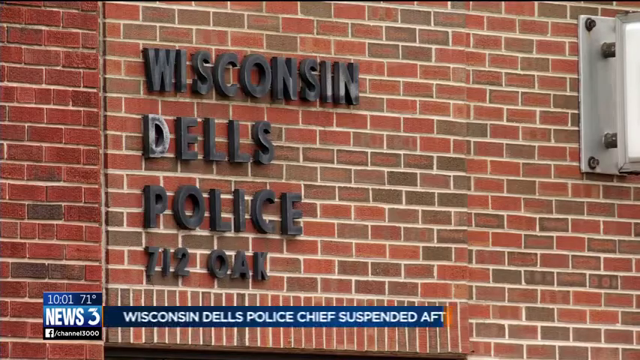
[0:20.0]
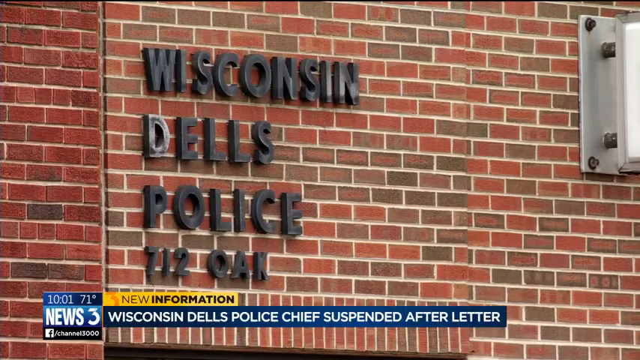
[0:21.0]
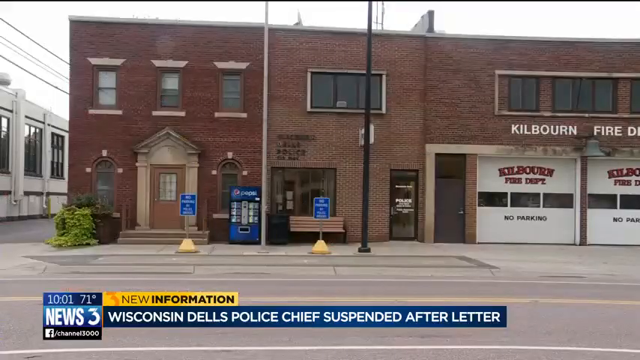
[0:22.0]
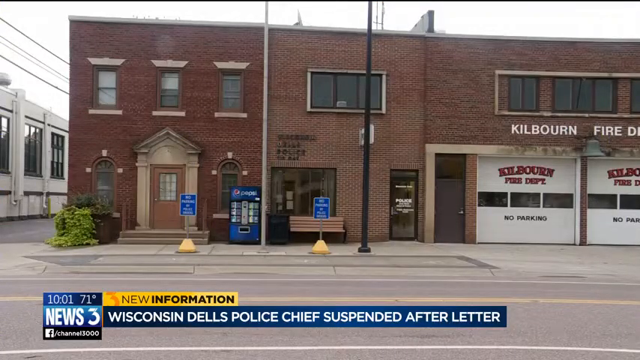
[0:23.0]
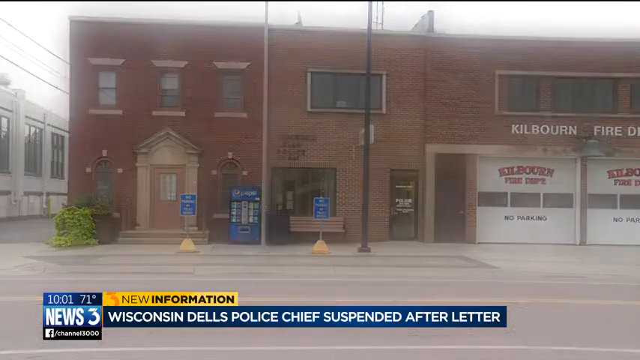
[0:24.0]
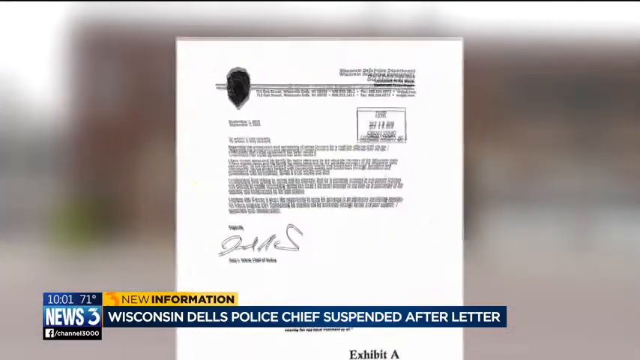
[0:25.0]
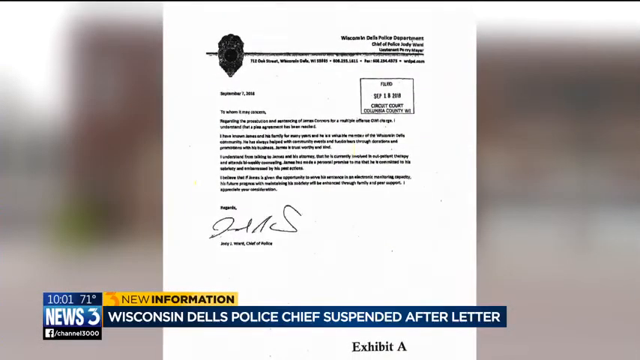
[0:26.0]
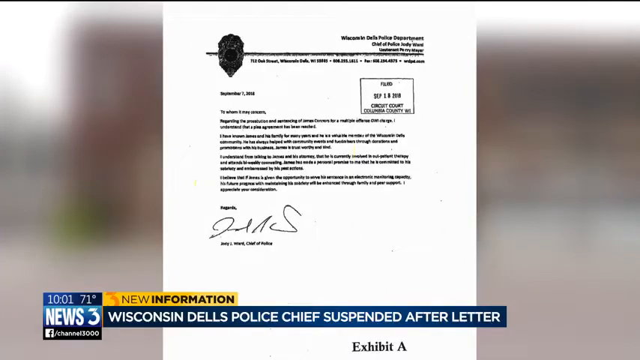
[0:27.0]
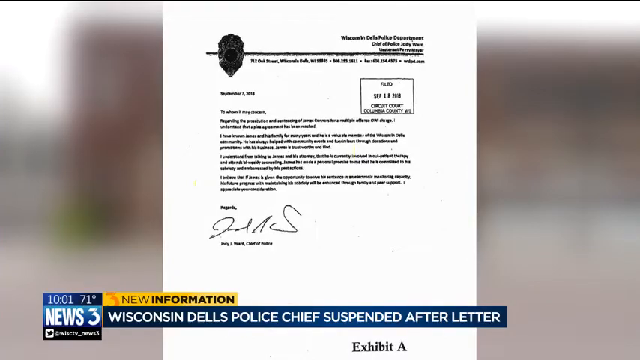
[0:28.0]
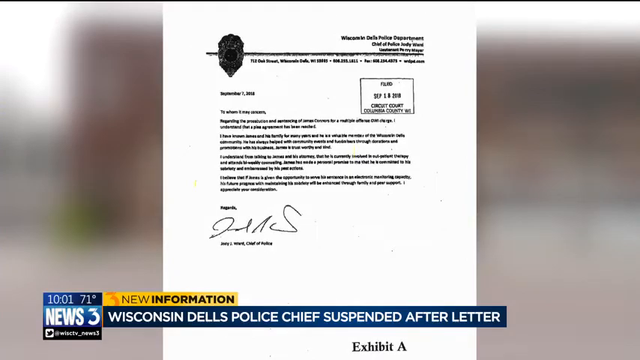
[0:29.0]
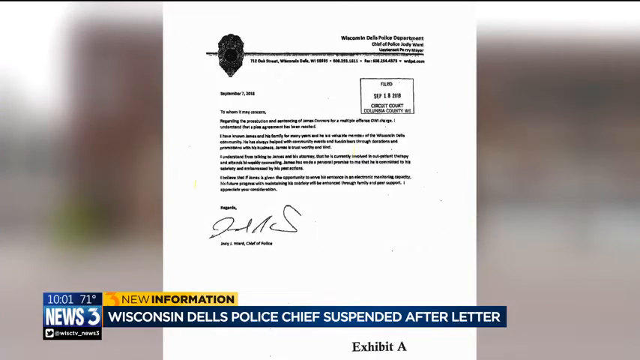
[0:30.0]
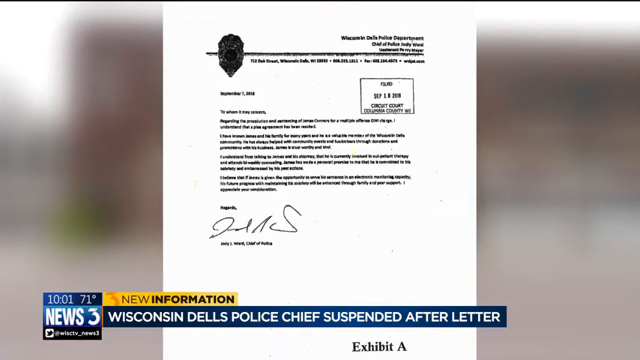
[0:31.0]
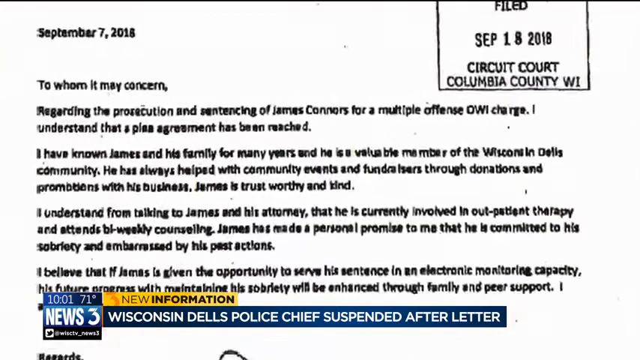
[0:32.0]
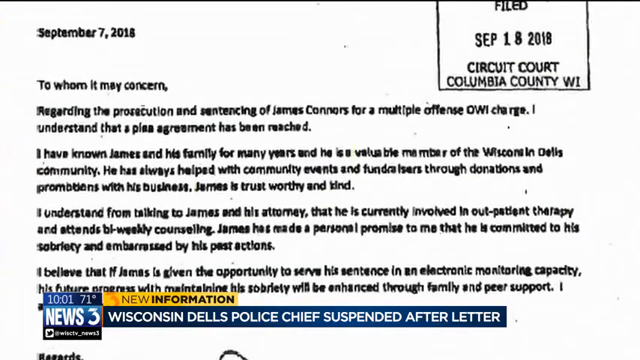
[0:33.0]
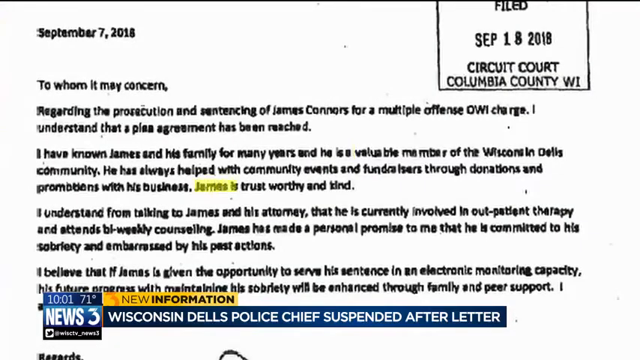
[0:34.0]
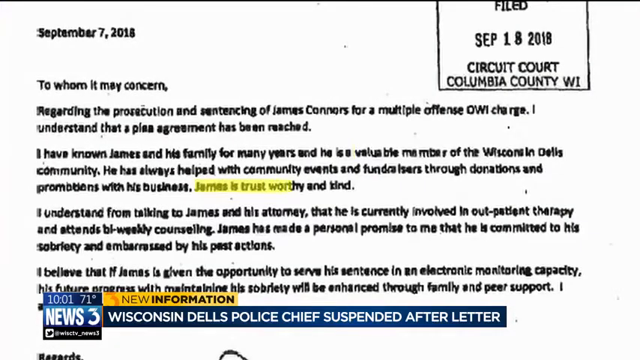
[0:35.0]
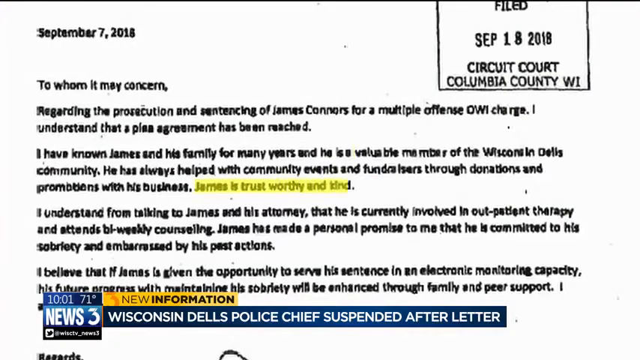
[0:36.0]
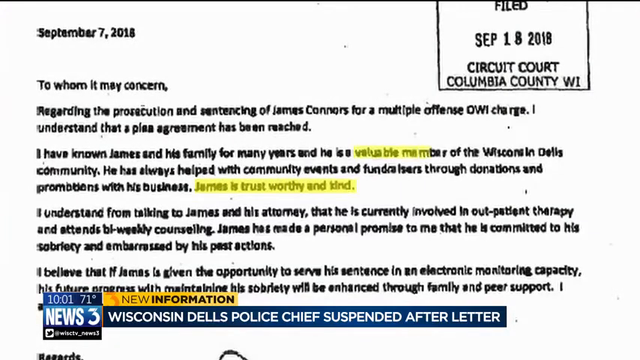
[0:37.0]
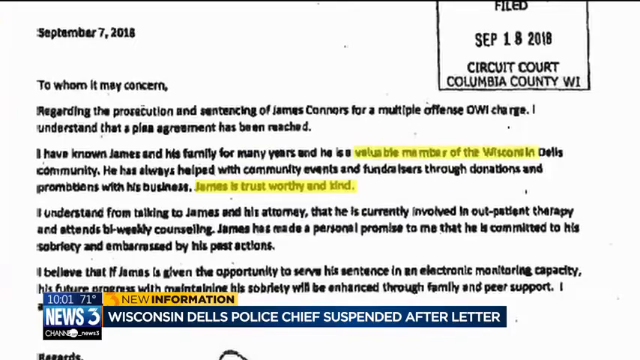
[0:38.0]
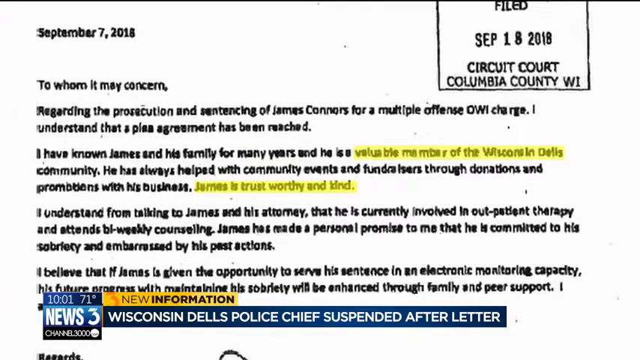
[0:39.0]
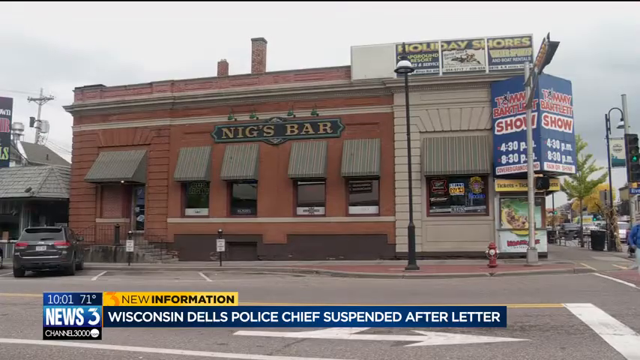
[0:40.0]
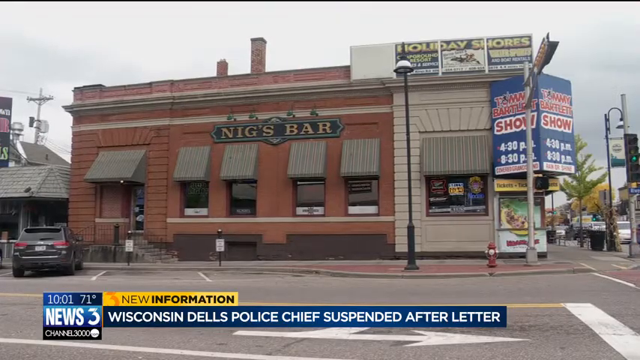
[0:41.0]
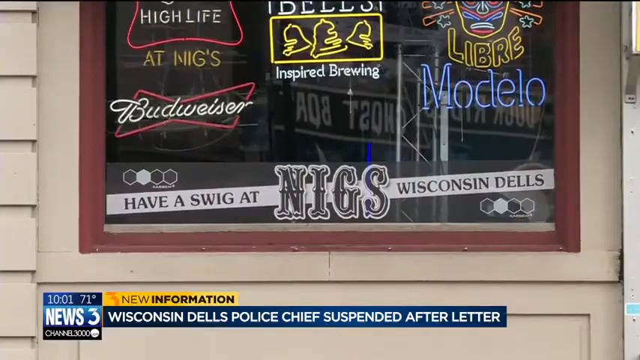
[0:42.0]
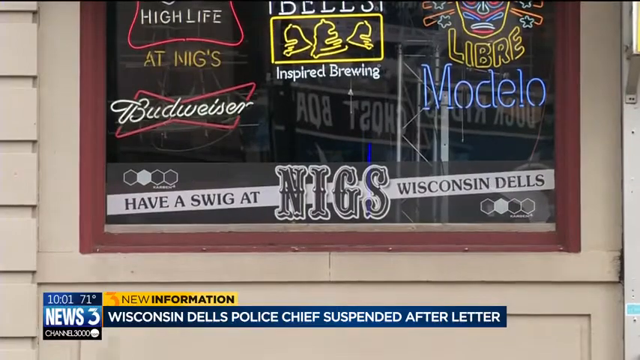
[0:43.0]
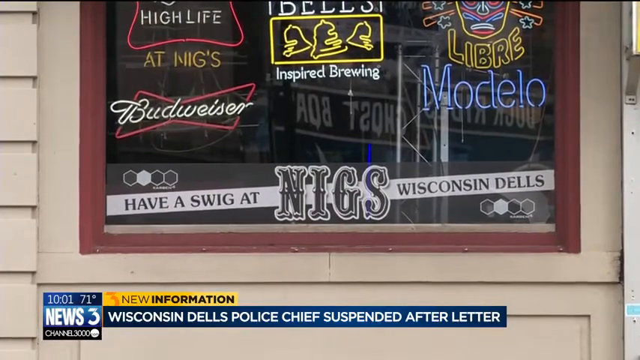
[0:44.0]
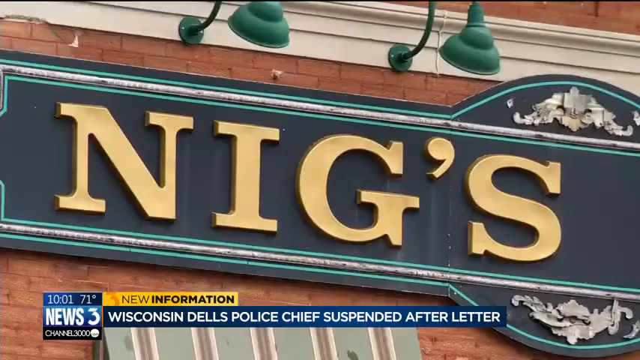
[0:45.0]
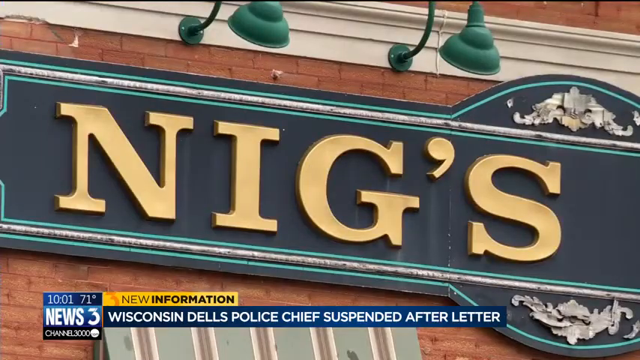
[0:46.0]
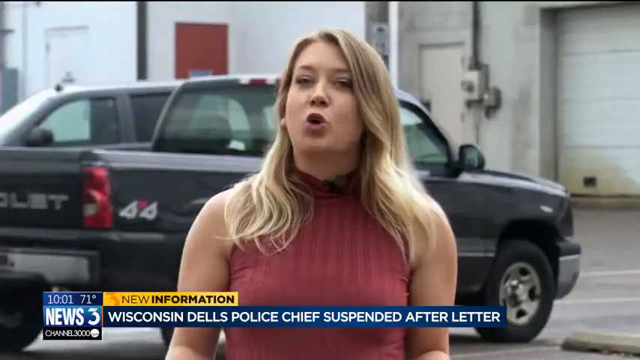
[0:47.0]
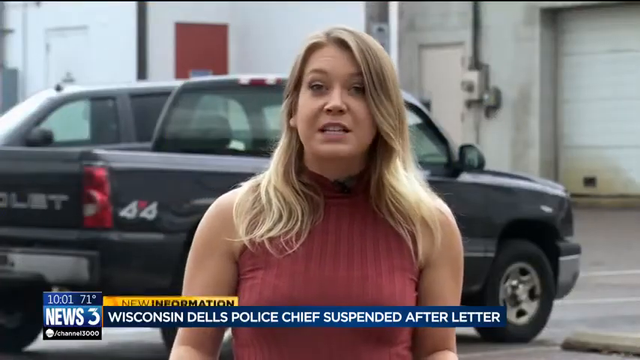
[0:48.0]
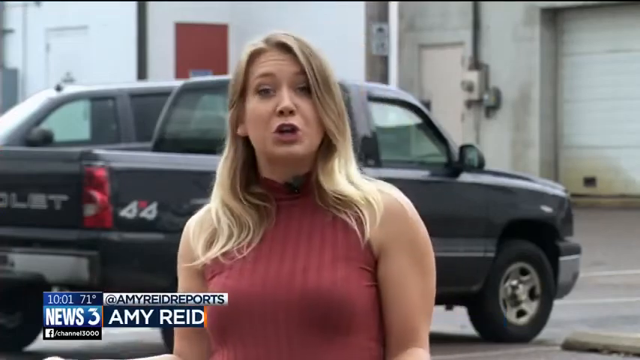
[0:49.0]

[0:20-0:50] On-screen text reads "Police," "Channel 3 News" and "Wisconsindale police chief suspended after letter." The police building and the fire department are shown. A letter appears on the screen, at first too small to read. Its text then reads "September 7, 2018, to whom it may concern regarding the prosecution sentencing of James Connors for multiple offense DWI charge. I understand that a plea agreement has been reached. I've known James and his family for many years, and he is a valuable member of the Wisconsindale community. He's always helped with community events and fundraisers through donations and promotions," and continues "I understand from talking to James's attorney that he's currently involved in out-of-patient therapy and attend bi-weekly counseling." Next, a bar with a lot of alcohol is shown, with the bar's name on screen. Then a blonde woman appears, identified as the reporter Amy Reed.